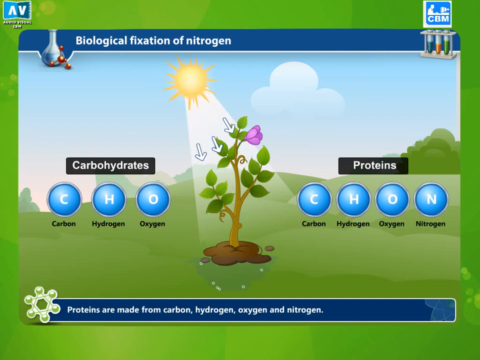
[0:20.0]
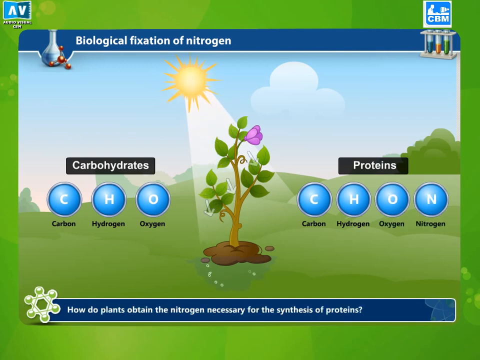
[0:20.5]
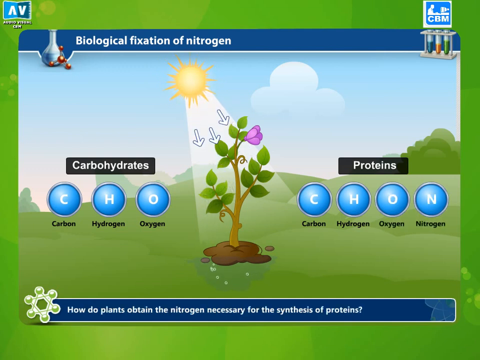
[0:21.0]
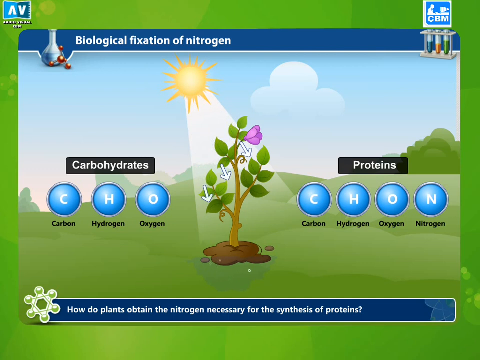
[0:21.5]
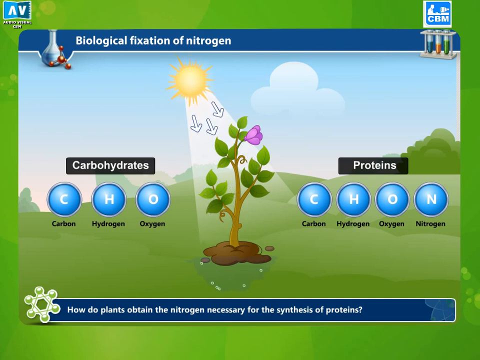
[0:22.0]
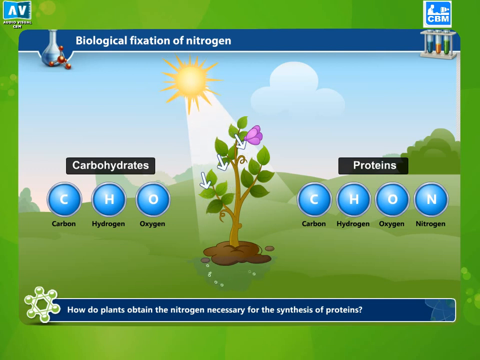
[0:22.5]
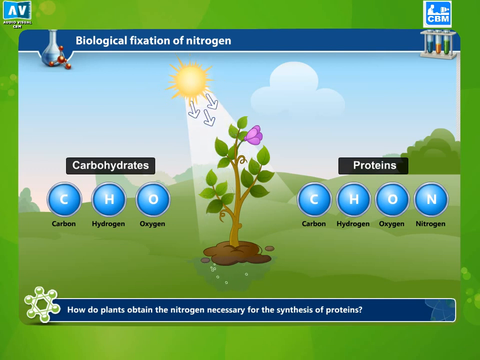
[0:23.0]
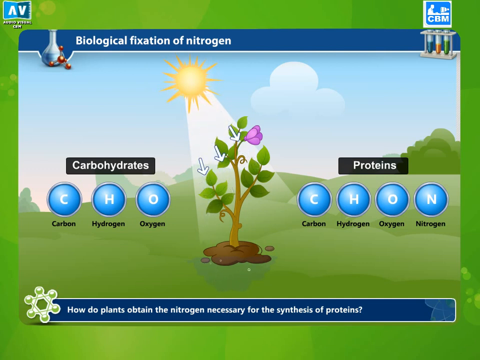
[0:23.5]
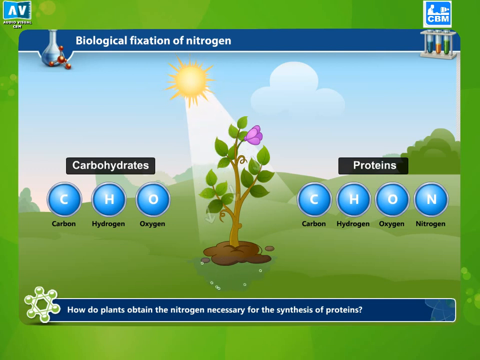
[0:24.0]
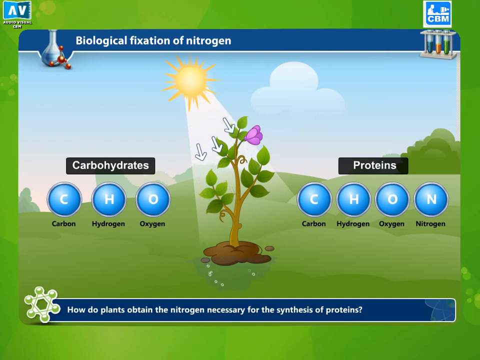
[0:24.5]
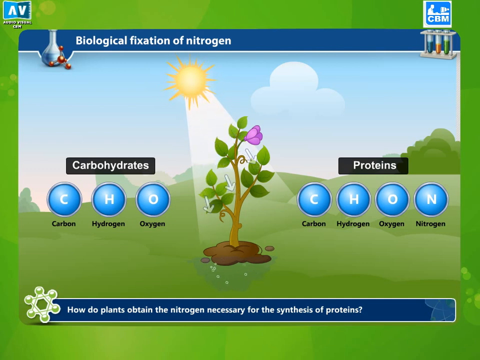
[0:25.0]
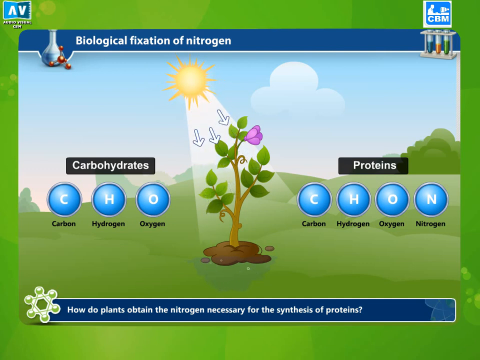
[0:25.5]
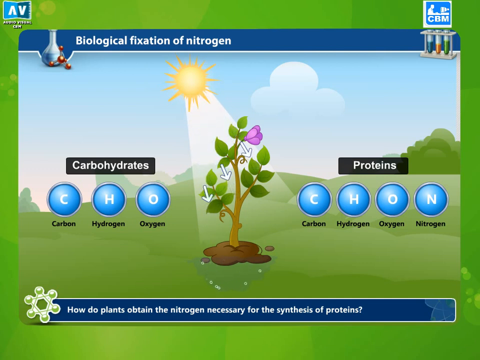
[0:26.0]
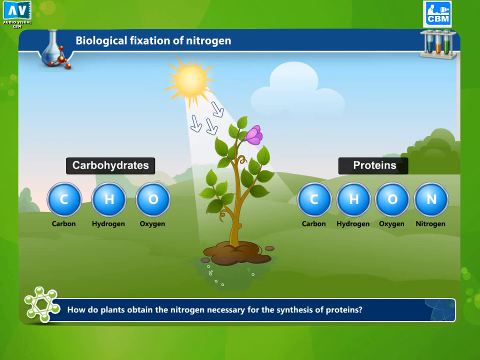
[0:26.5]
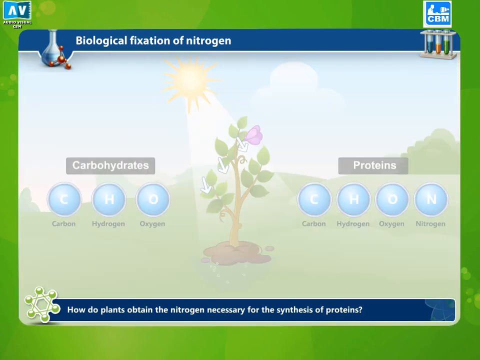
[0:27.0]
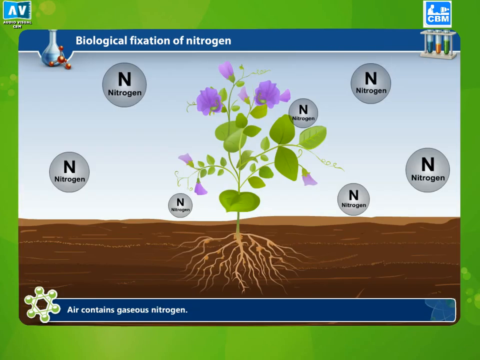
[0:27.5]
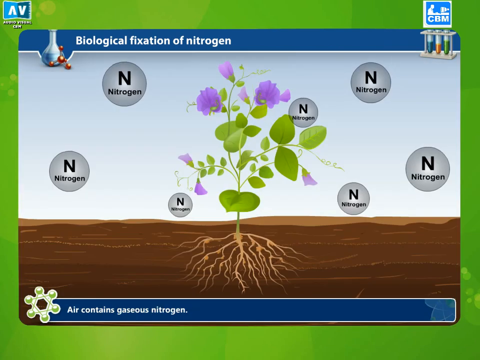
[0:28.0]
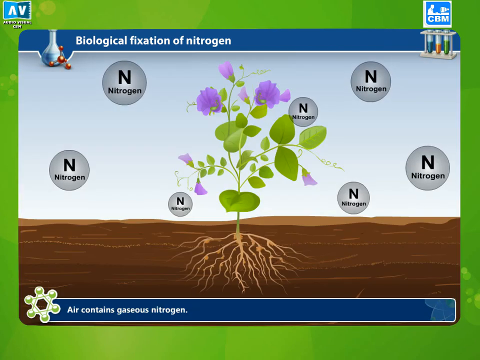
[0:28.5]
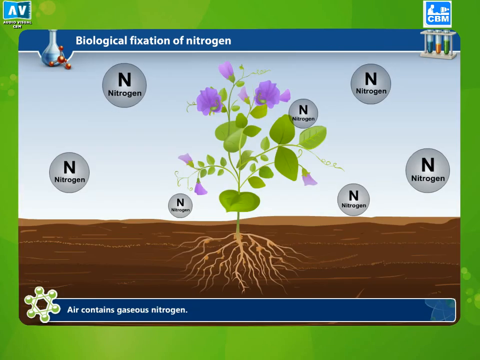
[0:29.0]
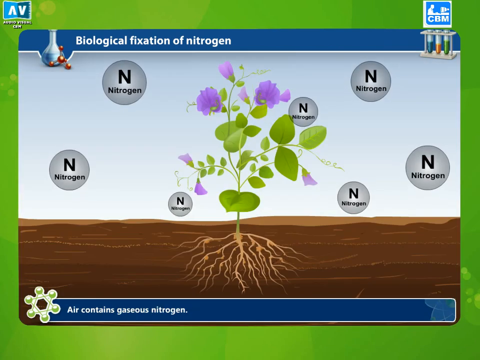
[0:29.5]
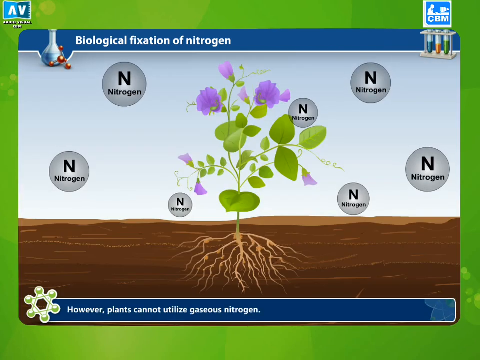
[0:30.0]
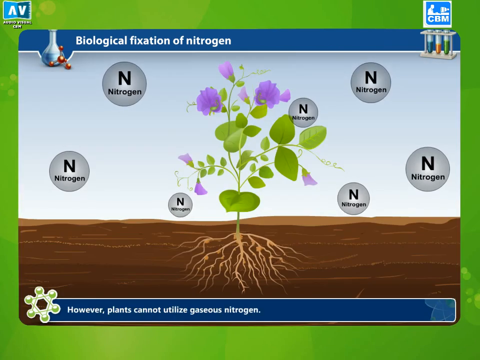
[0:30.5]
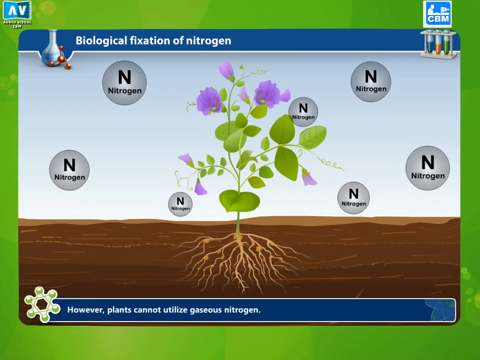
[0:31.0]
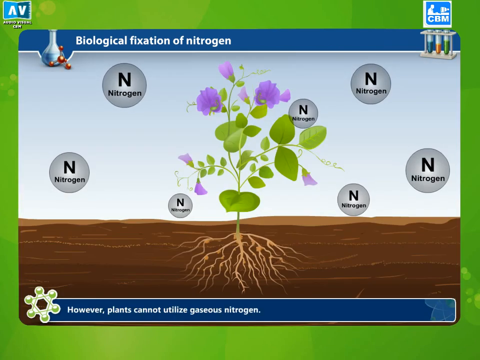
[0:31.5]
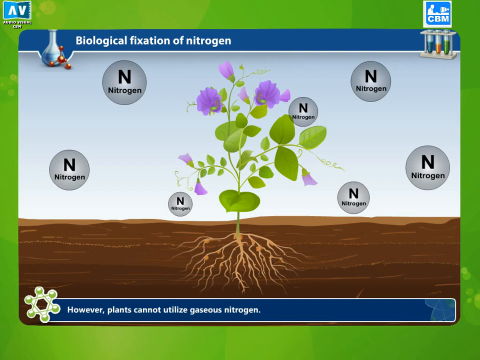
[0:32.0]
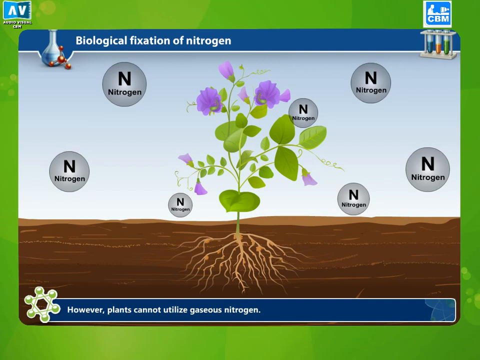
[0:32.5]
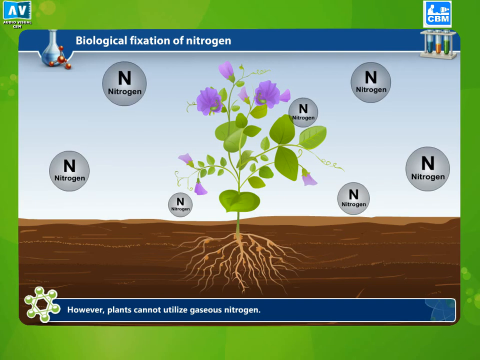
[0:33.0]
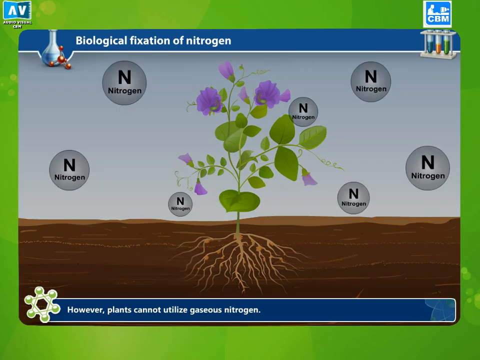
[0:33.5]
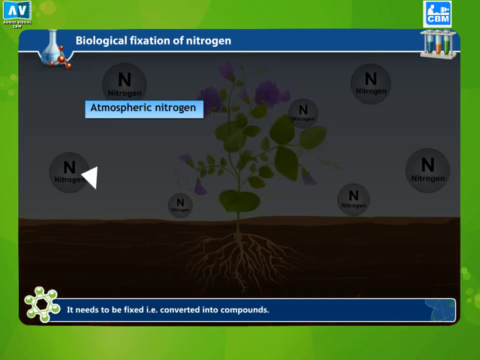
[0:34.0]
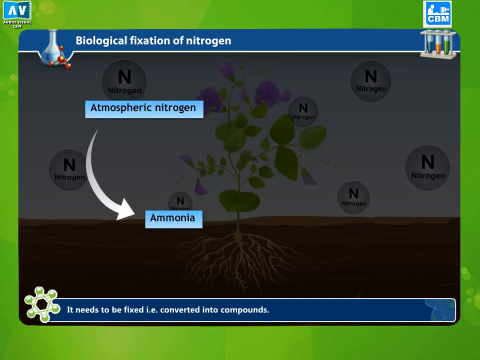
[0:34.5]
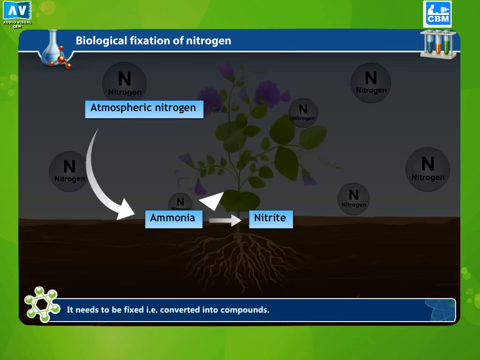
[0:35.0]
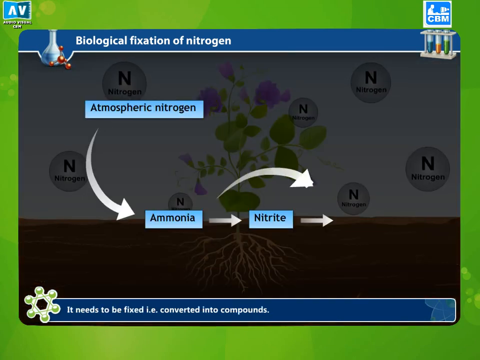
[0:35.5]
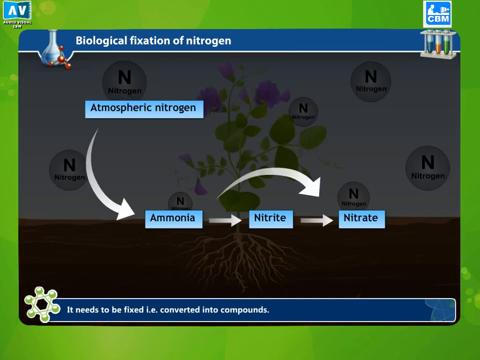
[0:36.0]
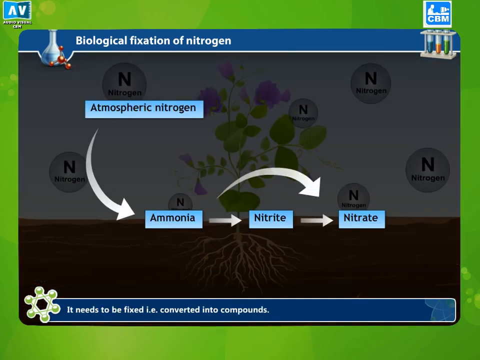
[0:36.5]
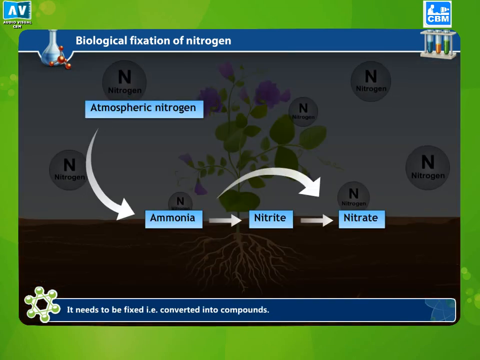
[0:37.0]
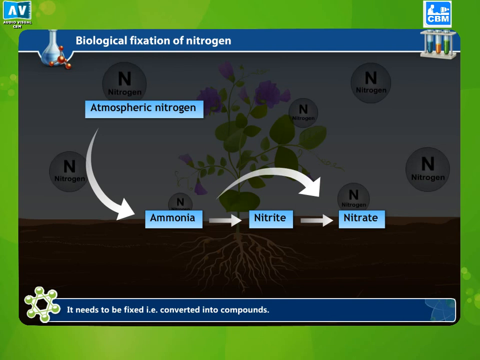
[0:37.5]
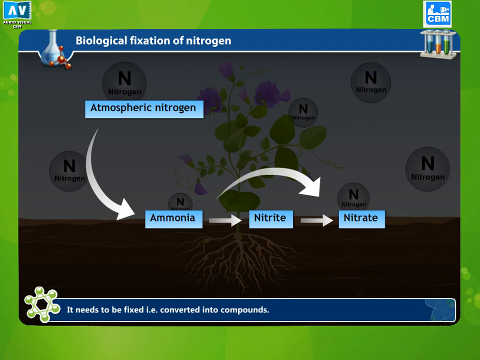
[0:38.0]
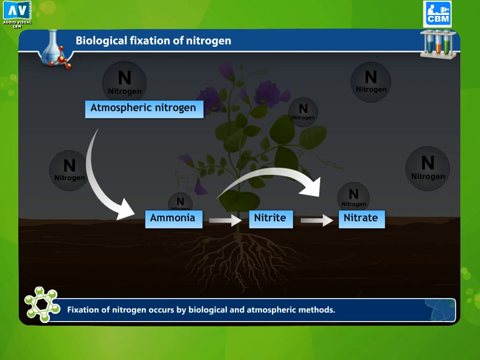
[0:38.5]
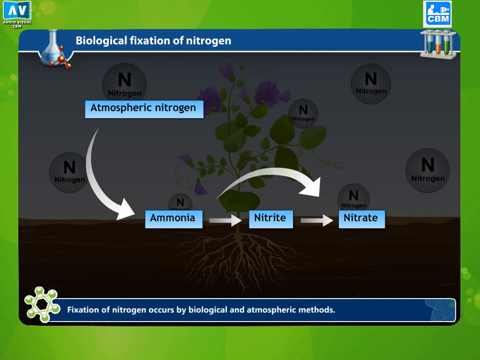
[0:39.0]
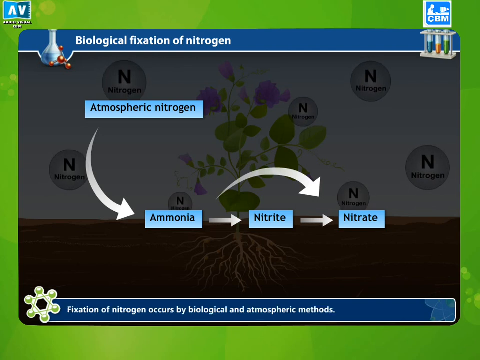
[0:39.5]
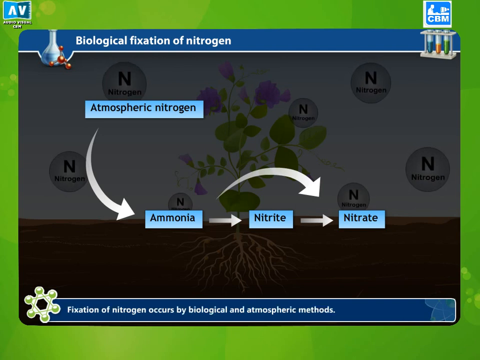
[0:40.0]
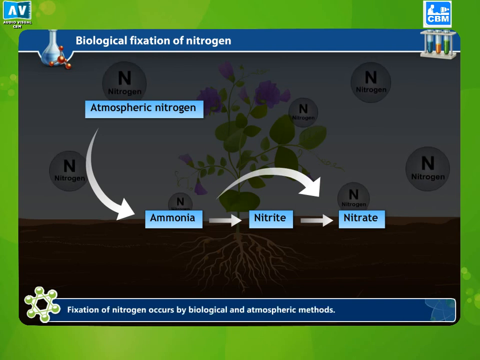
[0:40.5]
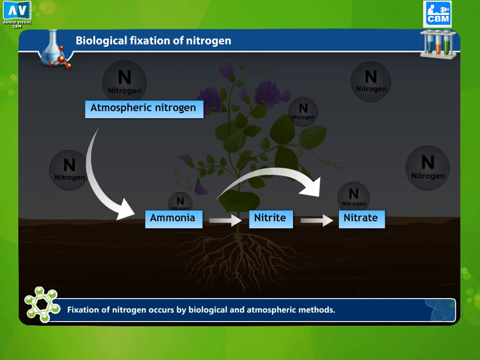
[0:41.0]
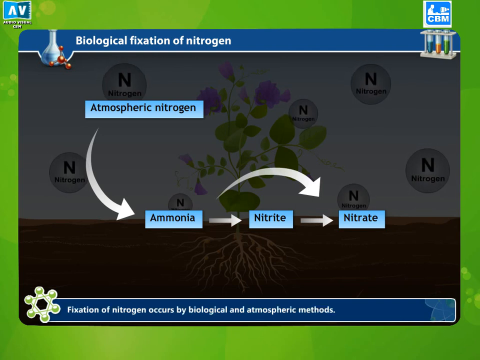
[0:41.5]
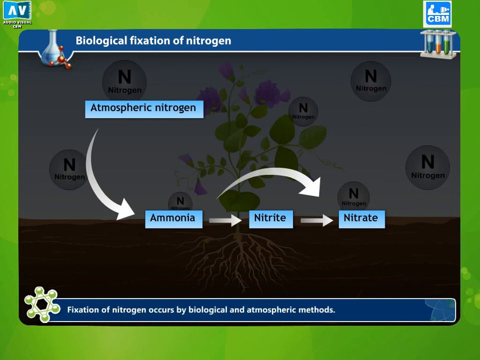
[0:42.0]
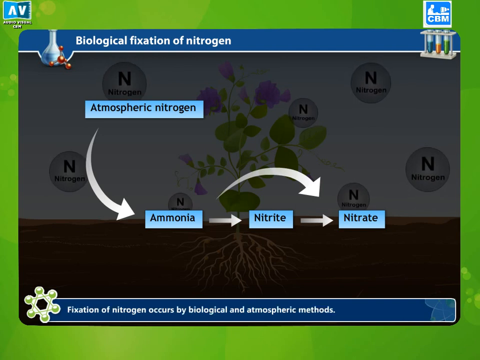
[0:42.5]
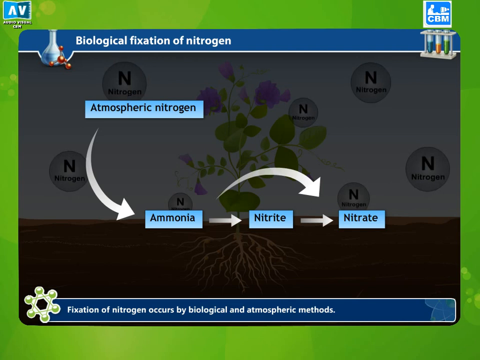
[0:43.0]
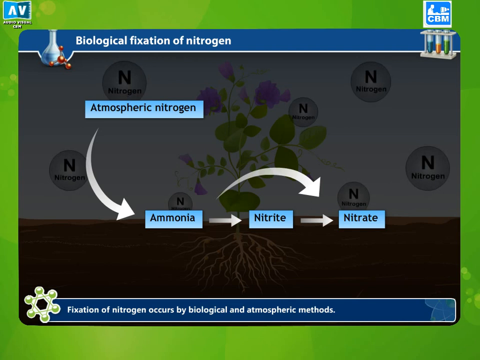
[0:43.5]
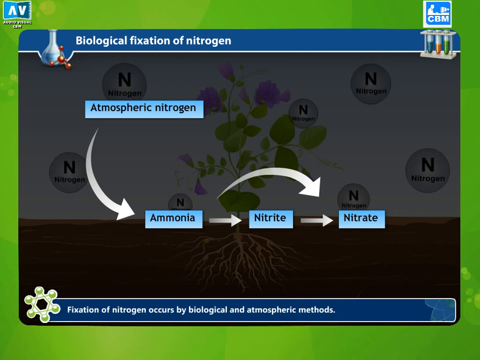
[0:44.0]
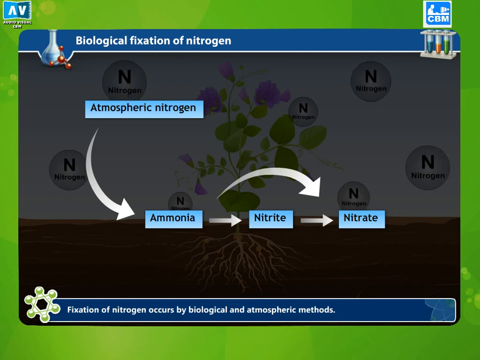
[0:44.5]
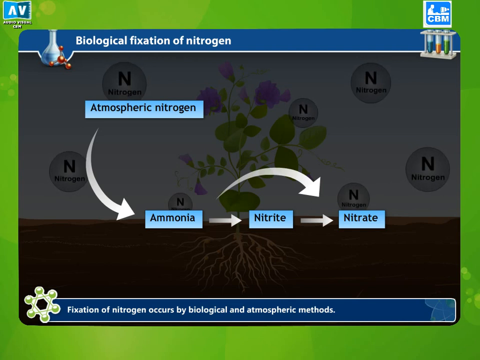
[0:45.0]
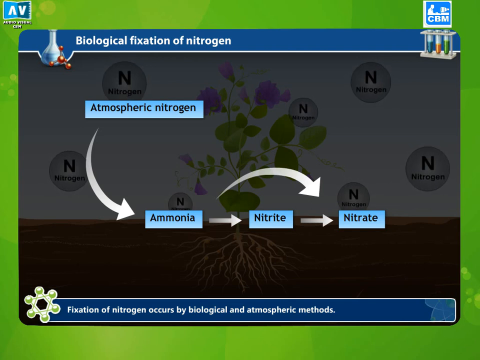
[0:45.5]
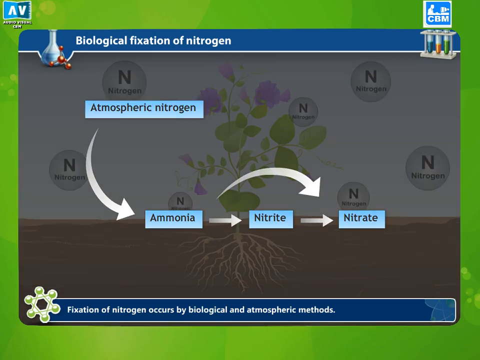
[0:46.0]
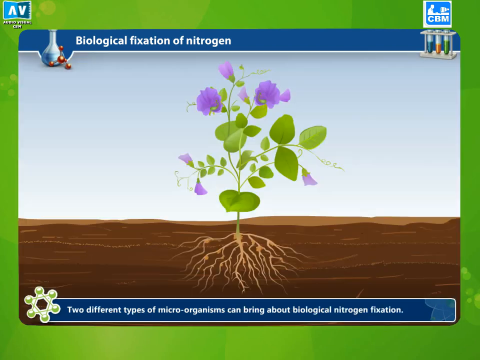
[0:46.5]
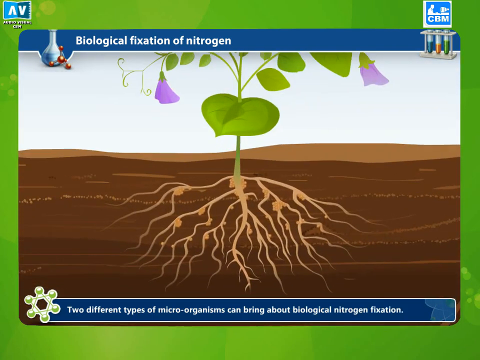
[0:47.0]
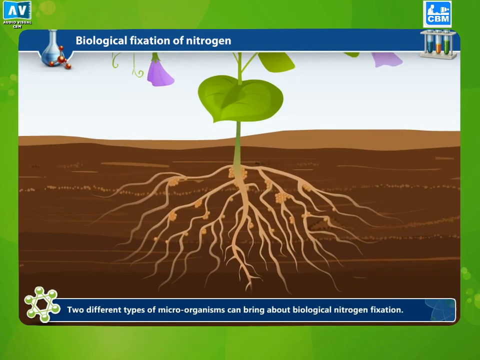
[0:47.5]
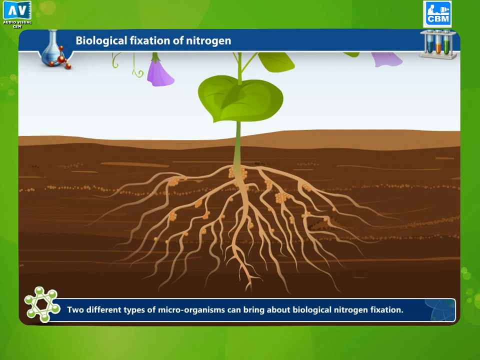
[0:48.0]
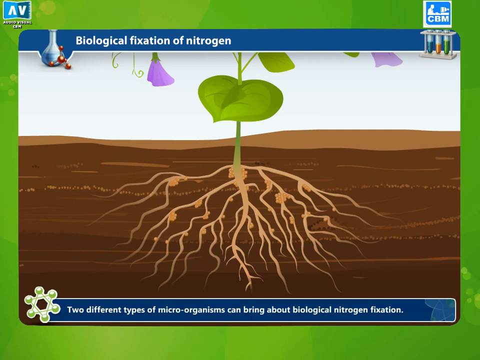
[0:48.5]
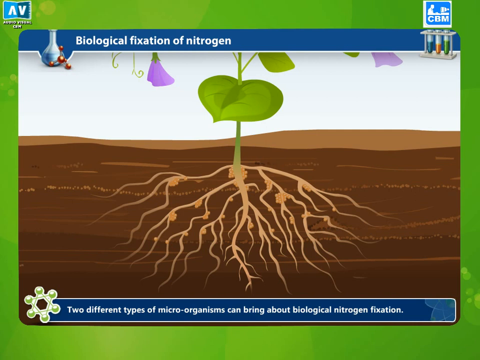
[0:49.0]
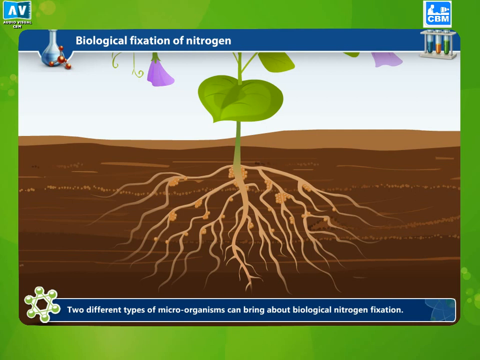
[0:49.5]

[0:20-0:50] The illustration shows a green field with rolling hills and some trees in the background. A plant with a purple flower at the top is in the foreground. A sun is in the background at the top of the illustration, and there is one cloud. To the left of the plant is the word "carbohydrates" with symbols for carbon, hydrogen, and oxygen underneath; to the right is "proteins" with the symbols for carbon, hydrogen, oxygen, and nitrogen underneath. At the bottom of the screen, white text on a blue banner reads "proteins are made from carbon, hydrogen, oxygen, and nitrogen." The video then changes to another screen showing a plant with purple flowers all over it and many nitrogen symbols all around it. The plant's roots are shown under brown dirt. At the top, text reads "biological fixation of nitrogen."